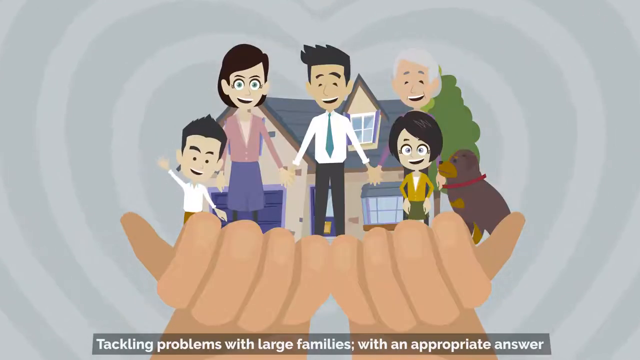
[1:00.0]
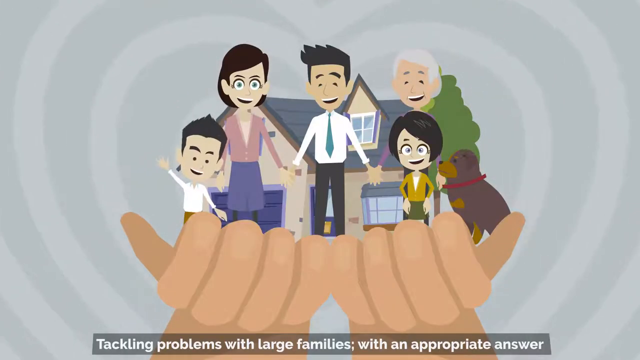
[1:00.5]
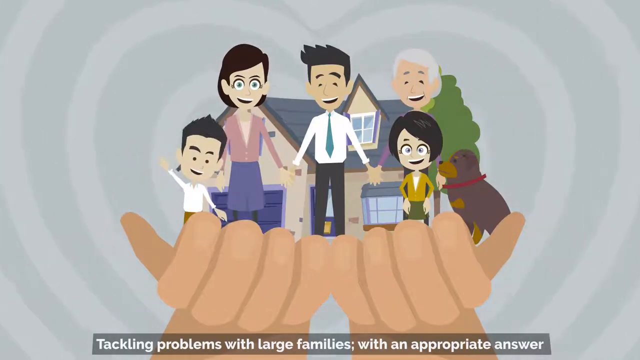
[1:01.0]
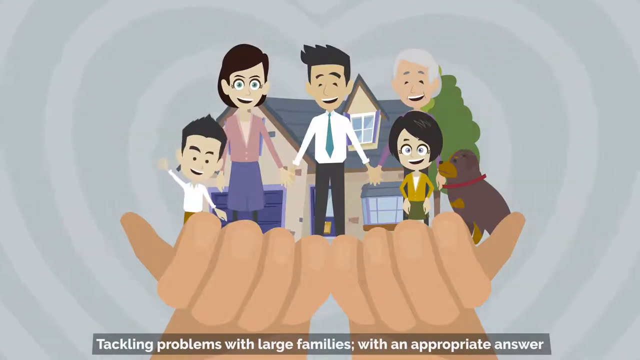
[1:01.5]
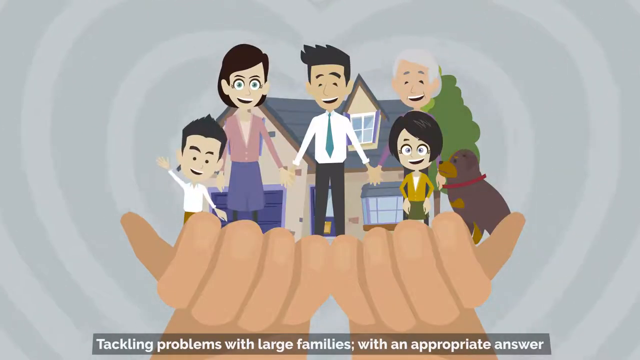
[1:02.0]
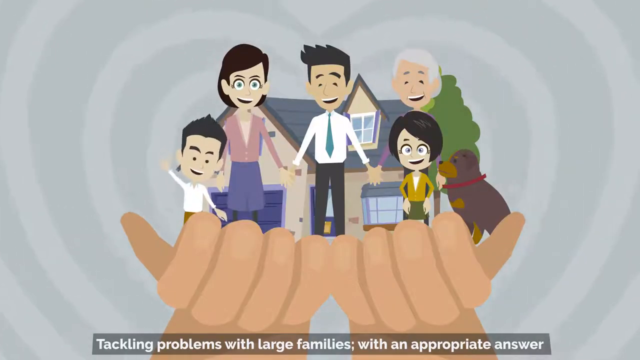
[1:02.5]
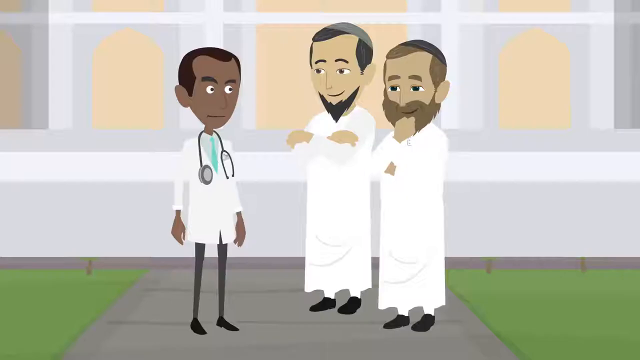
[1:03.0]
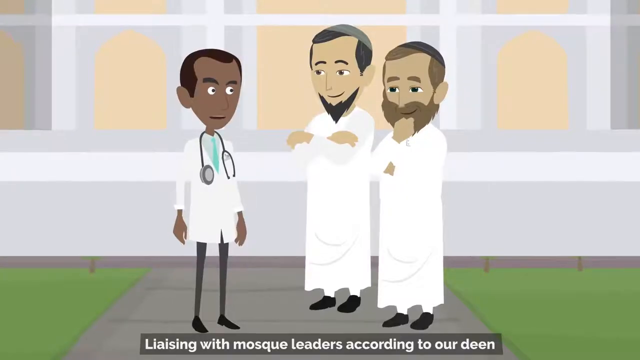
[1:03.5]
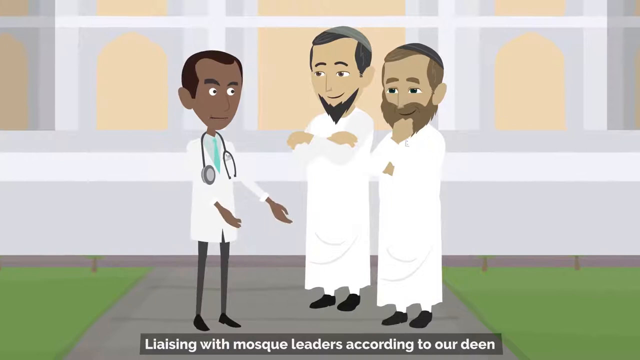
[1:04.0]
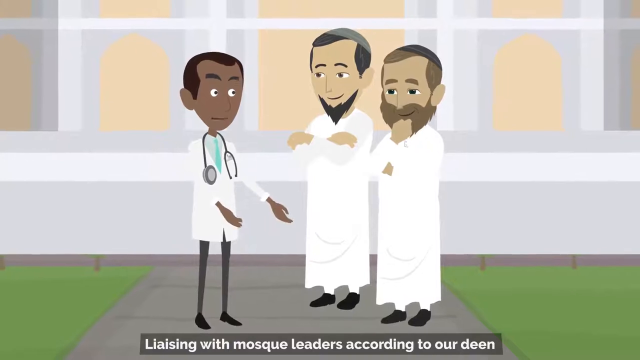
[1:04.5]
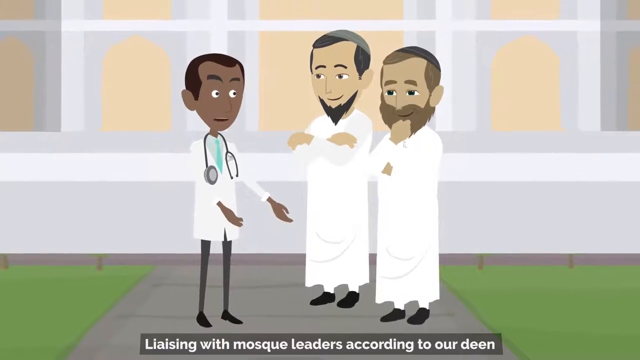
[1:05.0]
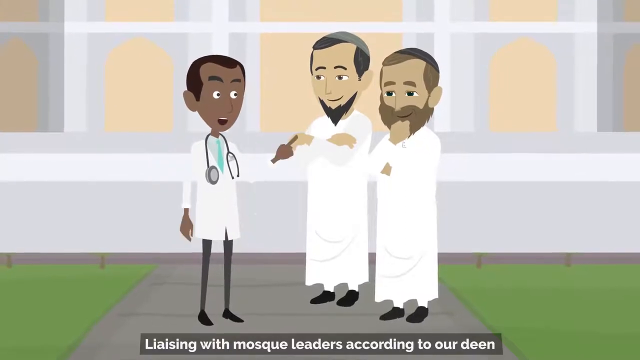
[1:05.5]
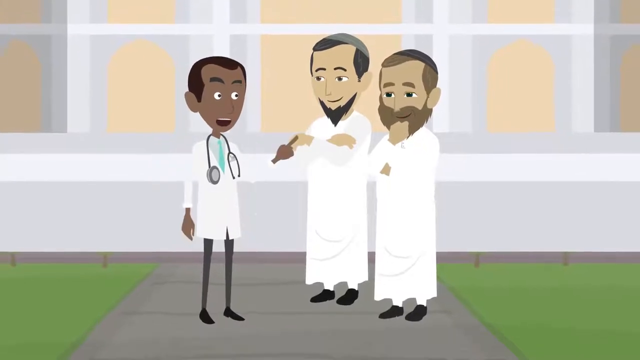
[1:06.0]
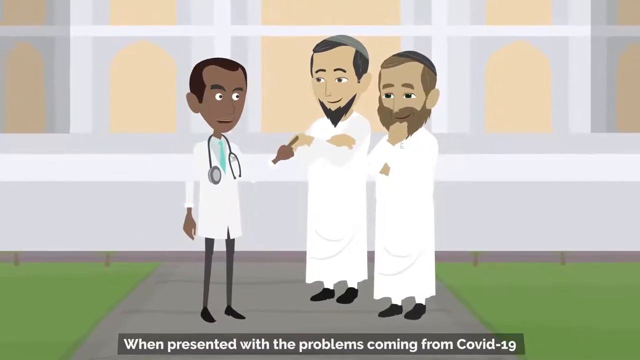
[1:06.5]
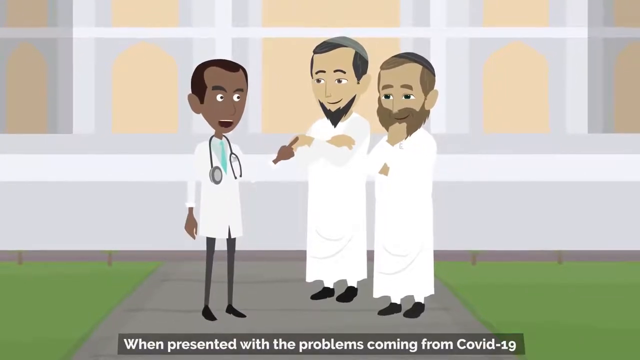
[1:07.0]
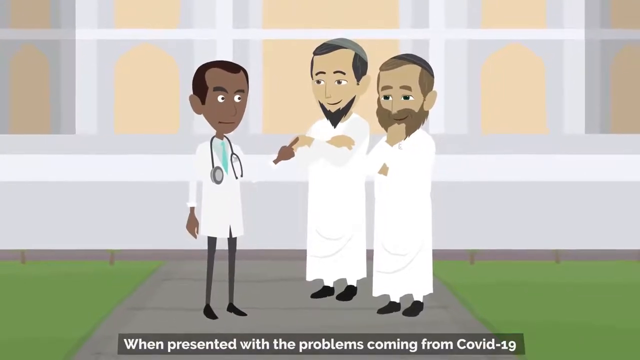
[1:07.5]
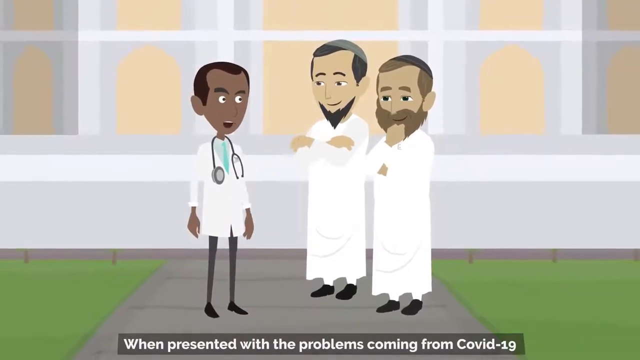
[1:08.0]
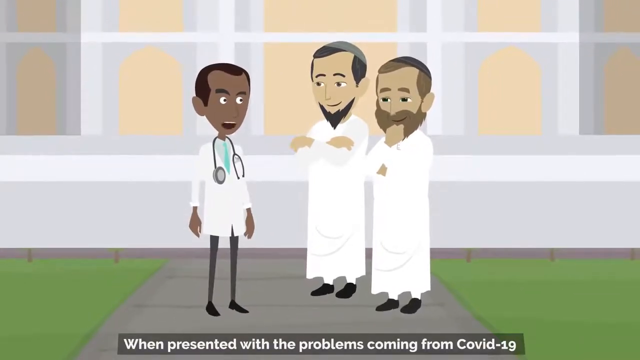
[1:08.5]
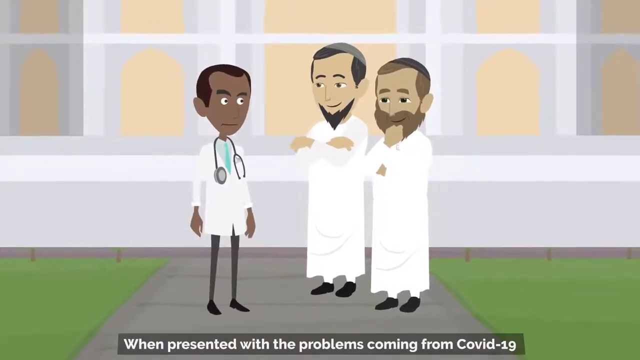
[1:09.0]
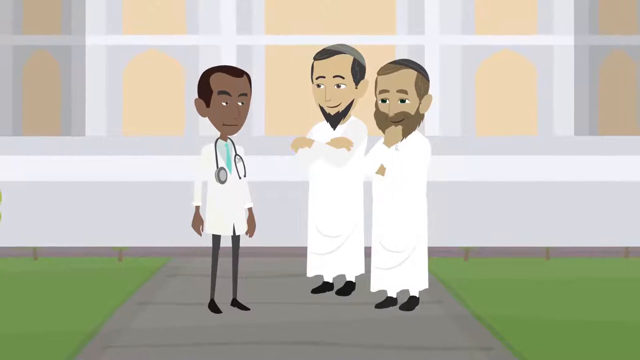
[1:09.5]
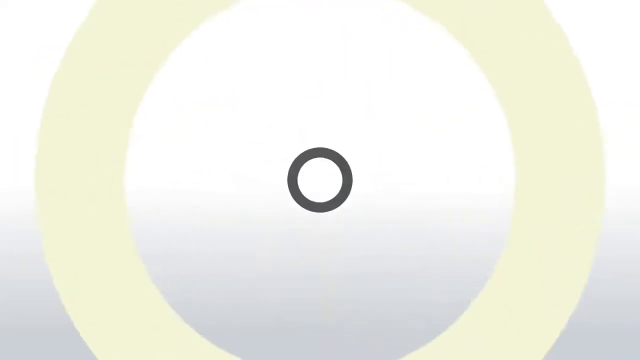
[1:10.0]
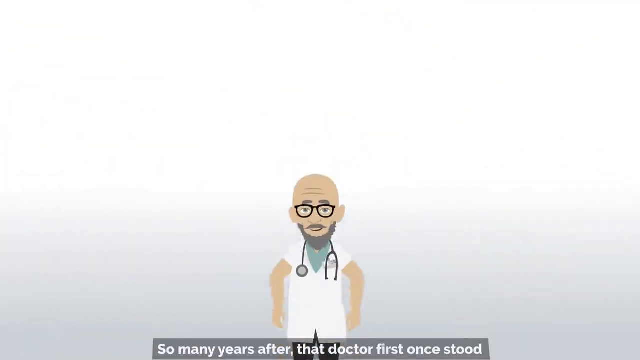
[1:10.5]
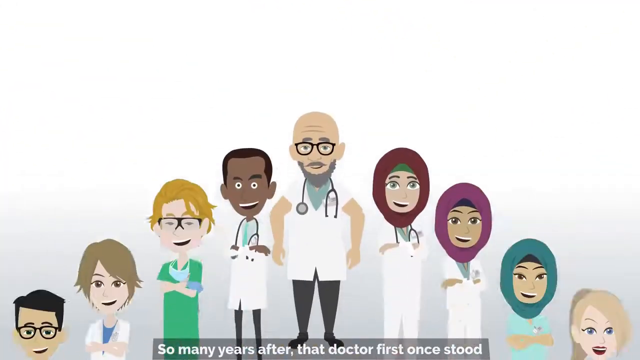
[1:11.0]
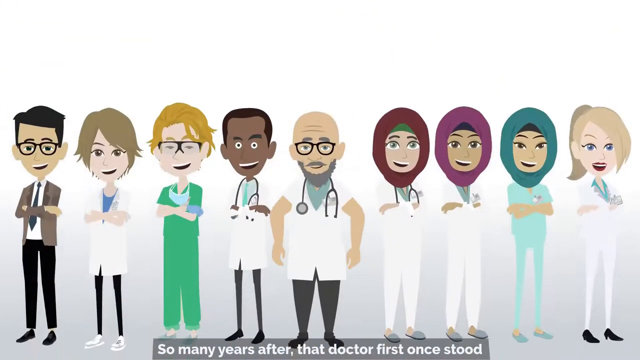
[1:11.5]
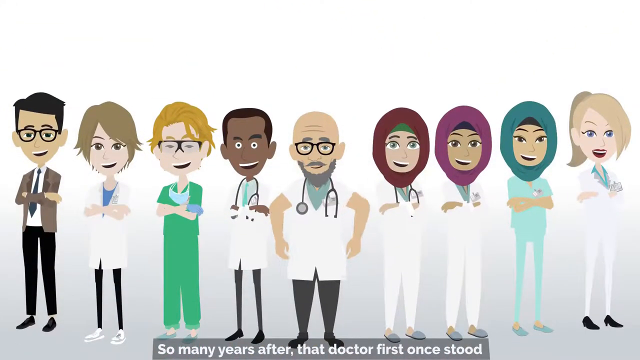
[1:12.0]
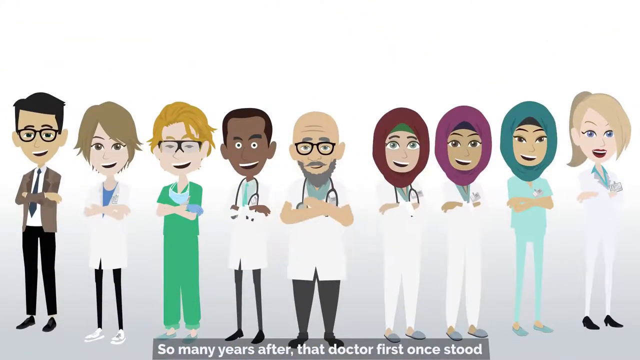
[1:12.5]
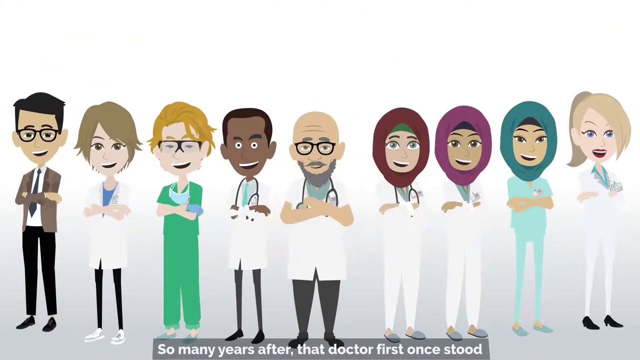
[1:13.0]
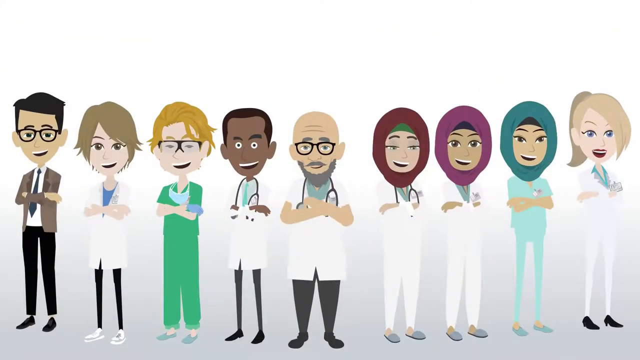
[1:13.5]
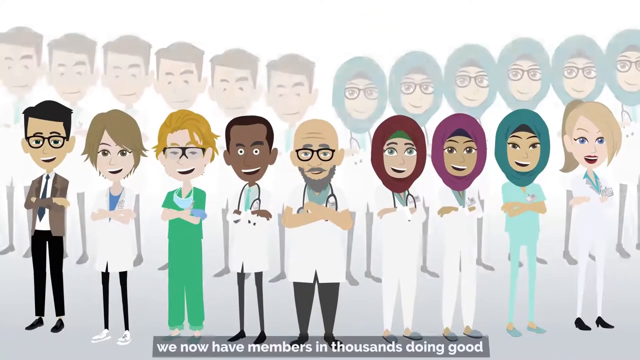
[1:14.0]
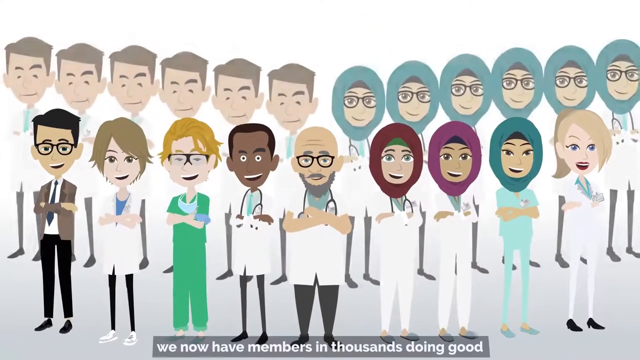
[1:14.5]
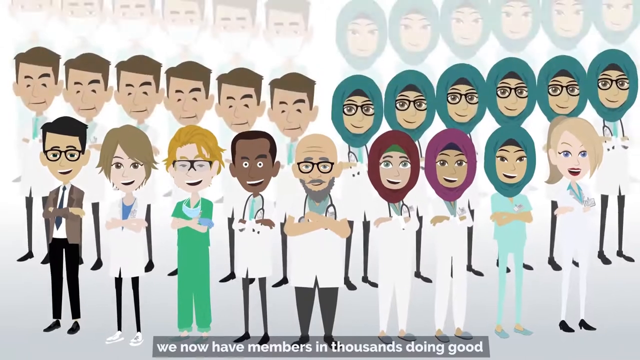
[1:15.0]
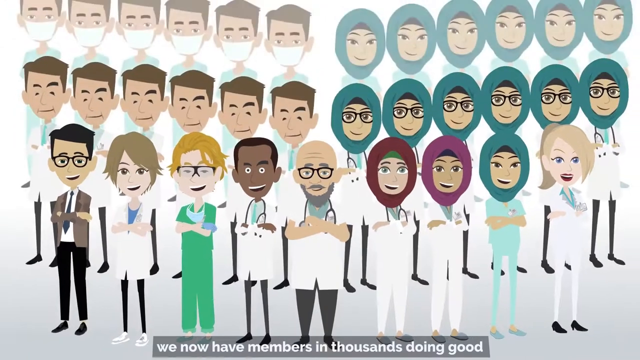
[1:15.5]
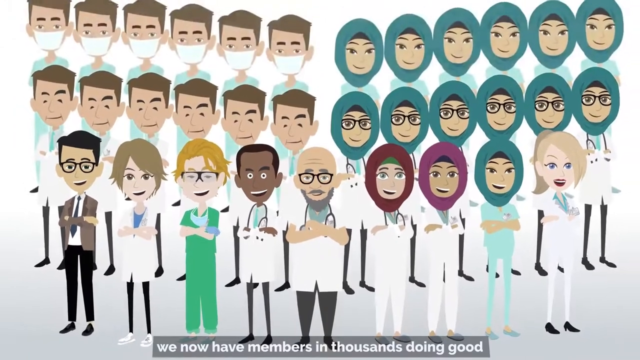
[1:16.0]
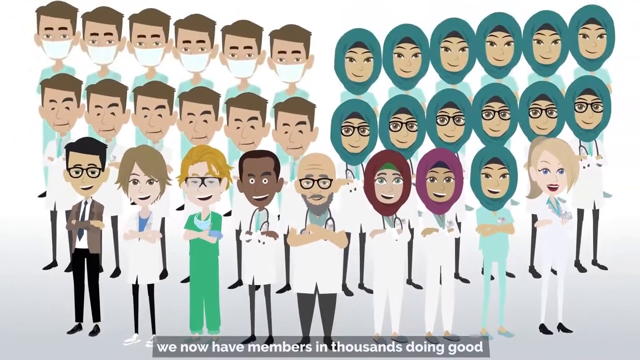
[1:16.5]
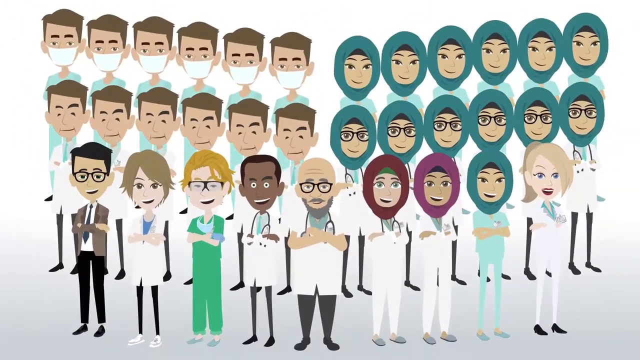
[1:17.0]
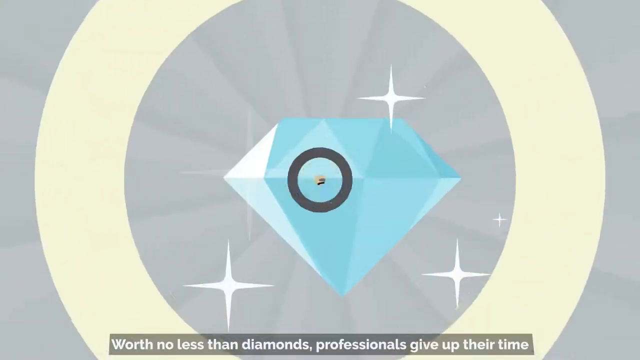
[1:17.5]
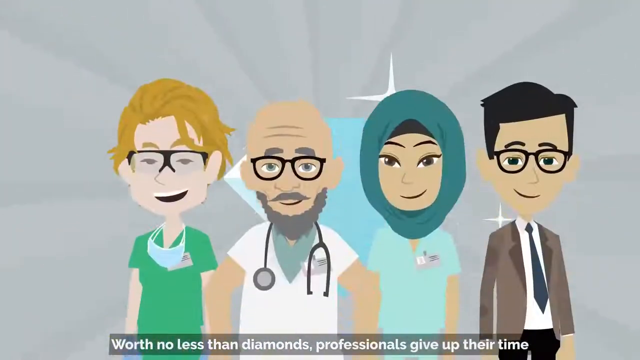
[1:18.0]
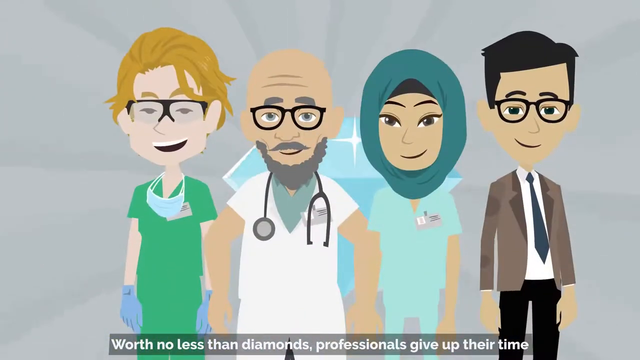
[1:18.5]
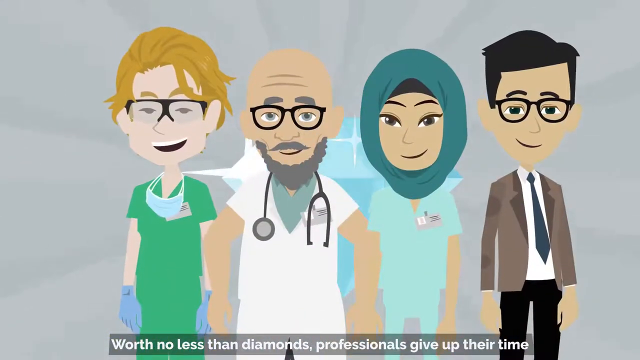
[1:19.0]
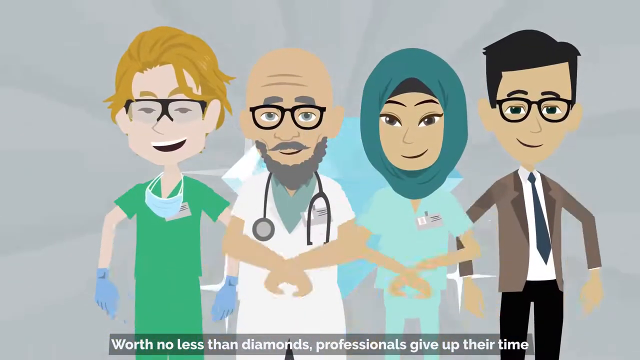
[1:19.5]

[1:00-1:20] A cartoon shows two hands, thumbs extended by their sides, holding a house, five people and a dog. From left to right the people are a son, a mother, a father and a daughter; standing behind the daughter on the right of the image is a grandparent, and standing to the right next to the daughter is a large dog wearing a red collar. The gray and white background consists of expanding concentric hearts, and the overall mood is one of care. Text then appears at the bottom about tackling problems with large families. Next, two mosque leaders appear, imams wearing long white robes with short beards, being spoken to by an African American doctor standing near them on the left, in front of a somewhat stylized mosque. The image then changes to nine people arranged left to right; some wear scarves and some are Caucasian. The bearded doctor stands in the center. All have their arms crossed and all are smiling while looking at the camera. They extend from the bottom of the screen about six tenths of the way up, and the background behind them is white with no text. The stadium-style seating motif resumes, with an equal number of male and female physicians, some wearing masks and some wearing glasses, arranged behind the first group. The scene then changes to four medical professionals staring at the camera and then crossing their hands across their upper chests.